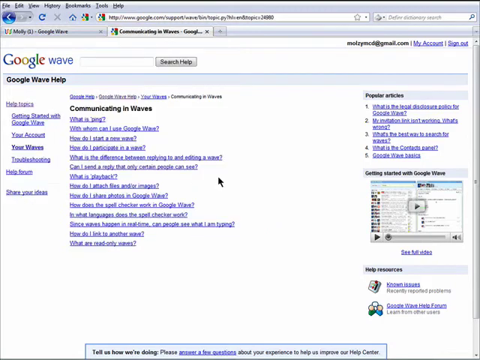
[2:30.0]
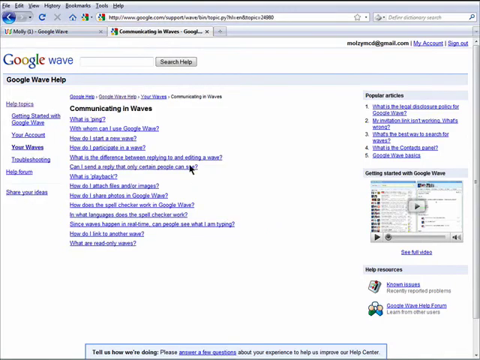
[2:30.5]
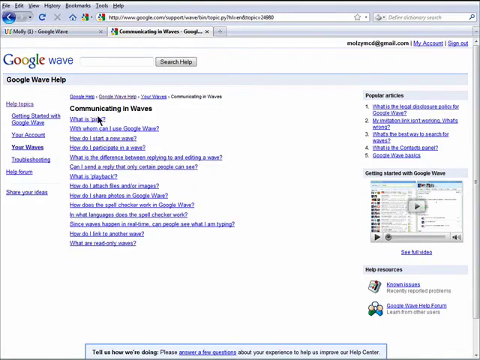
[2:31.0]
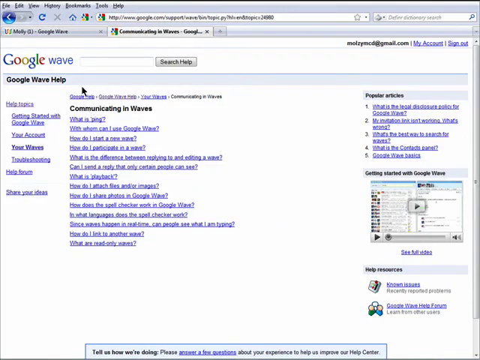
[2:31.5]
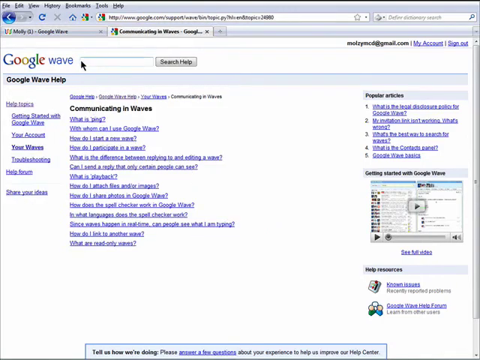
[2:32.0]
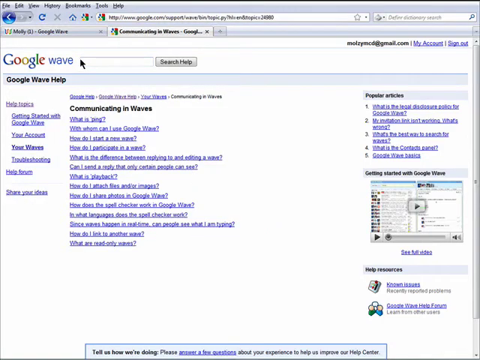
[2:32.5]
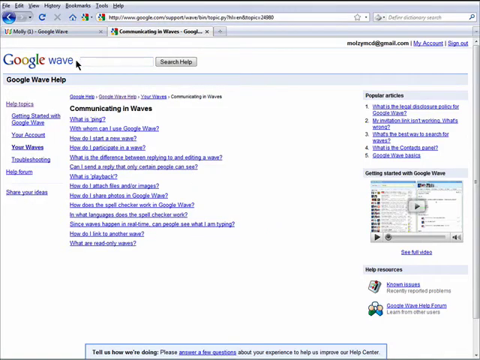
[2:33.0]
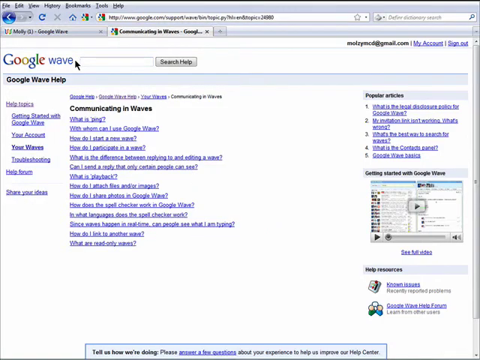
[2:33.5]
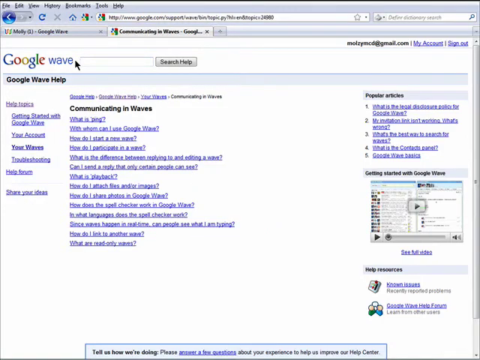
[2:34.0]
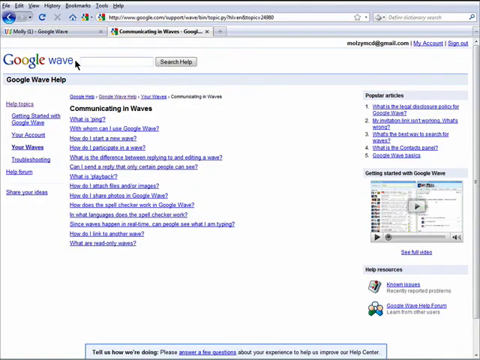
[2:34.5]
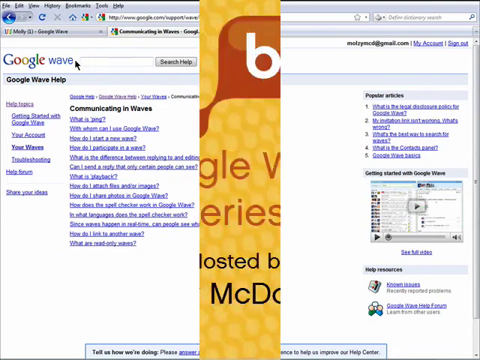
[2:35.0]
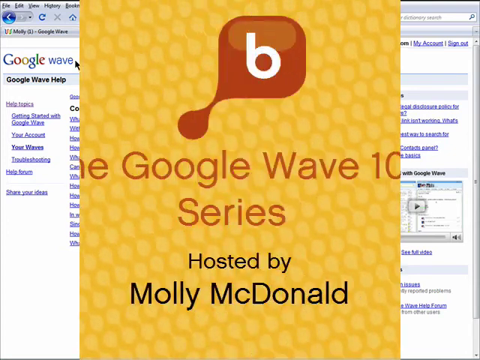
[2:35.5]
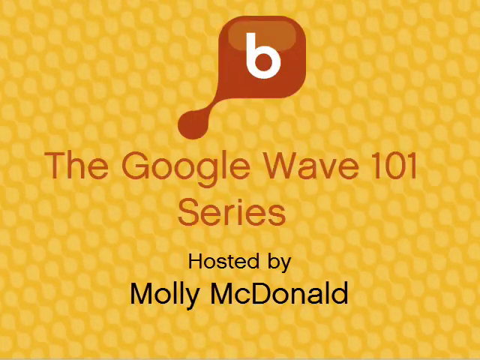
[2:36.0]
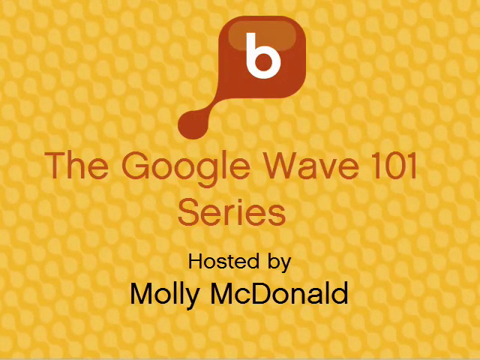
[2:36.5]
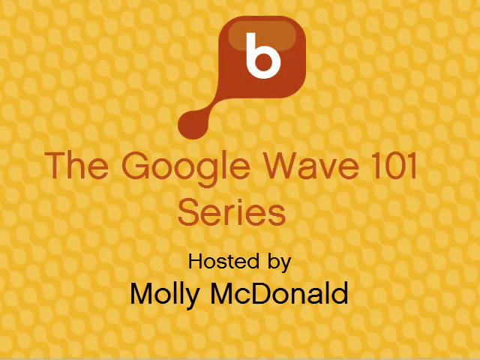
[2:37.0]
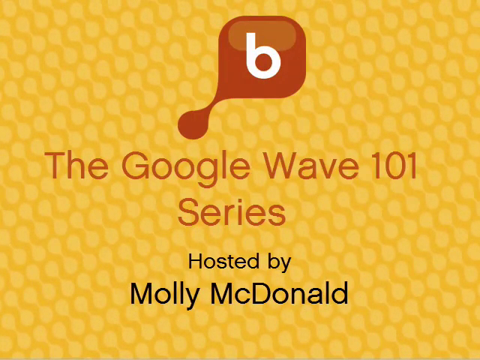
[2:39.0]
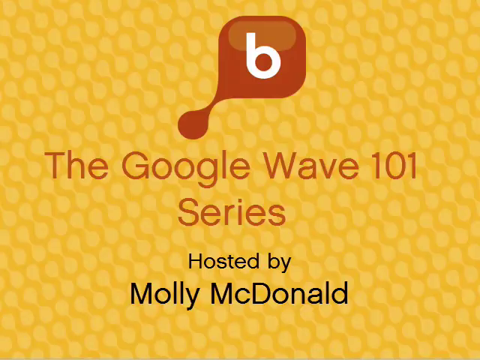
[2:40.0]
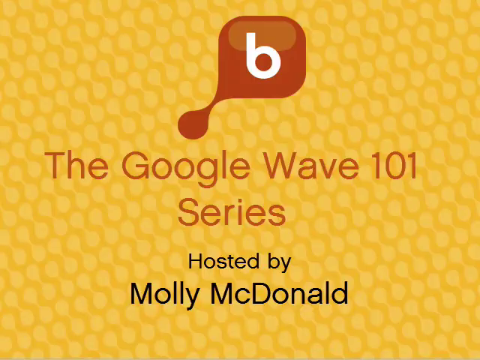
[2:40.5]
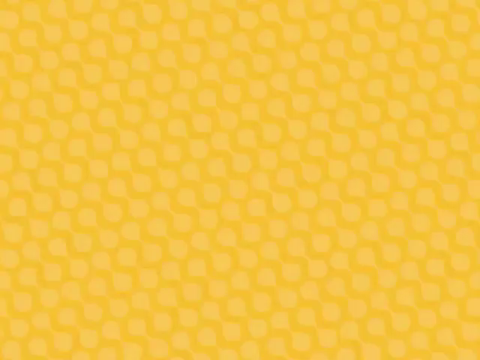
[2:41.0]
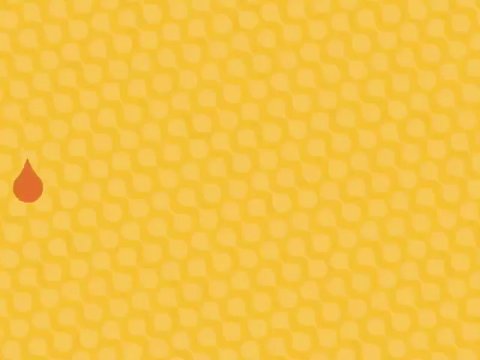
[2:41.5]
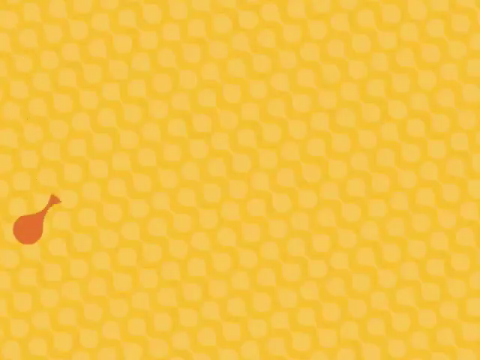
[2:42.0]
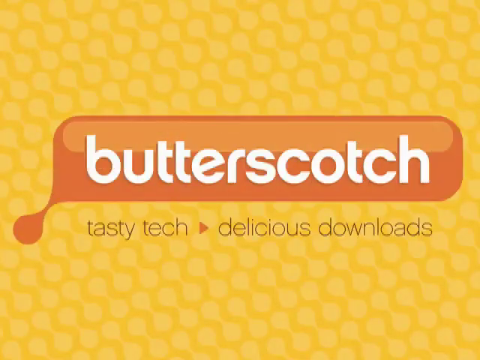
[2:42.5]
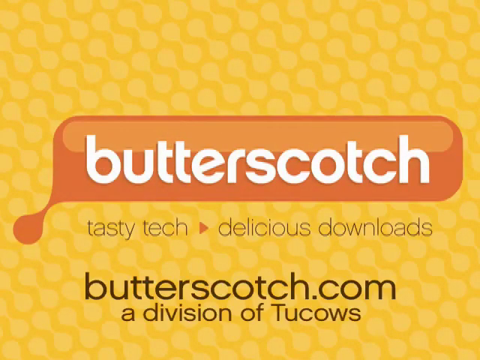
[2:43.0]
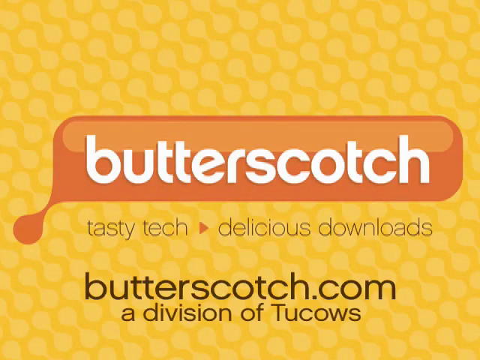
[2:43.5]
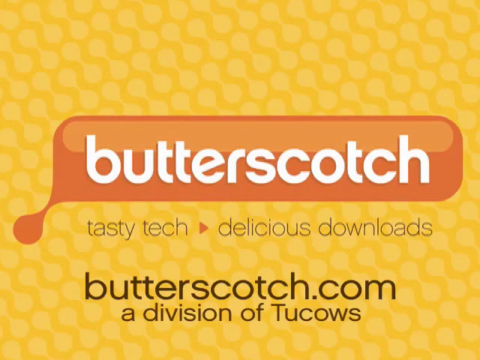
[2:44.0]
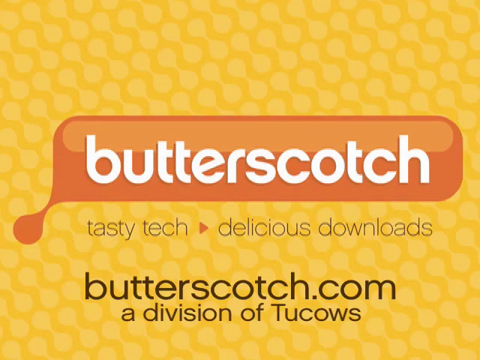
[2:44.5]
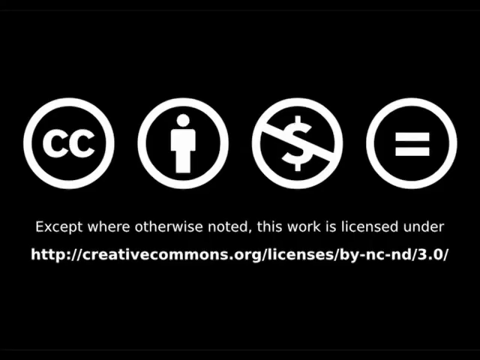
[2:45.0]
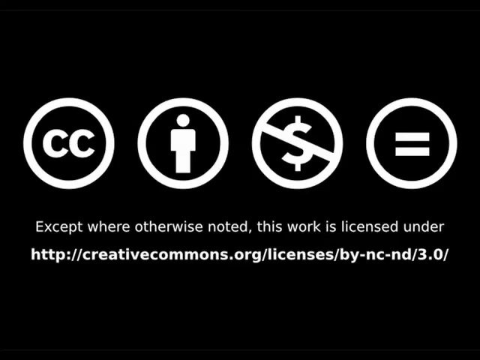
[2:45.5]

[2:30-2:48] To the right is a text field with a search help button. At the top right, the account is logged in as molzymced@gmail.com, with my account and sign out links. Underneath it says "Google Wave help", with help topics on the left, a few different hyperlinks, and popular articles all the way to the right. He moves up to the search help text field but does not press anything. The video then goes to the main screen from the beginning, with light orange dots all around and the orange blob with the letter B; it says "the Google Wave 101 series" in orange, the same color as the blob, and "posted by Molly MacDonald" in blue or black. It then goes to the Butterscotch screen: "butterscotch" written in white, and underneath it, side by side, "tasty tech" in lowercase, an orange arrow pointing right, and "delicious downloads". Below that is "butterscotch.com" in black, in bigger text than the line below it, which says "a division of TUCOWS". There are also symbols including a person and a money sign with a slash, text saying "except for otherwise noted" it is licensed, and an HTTP web address.